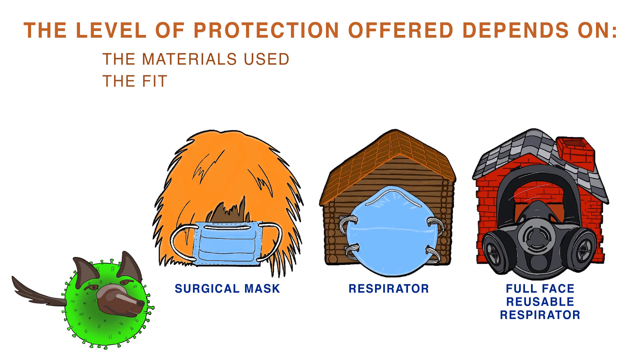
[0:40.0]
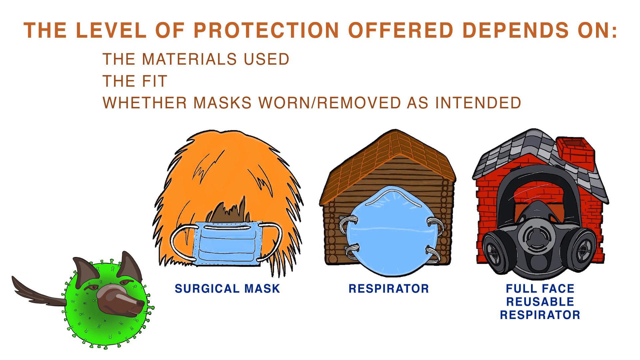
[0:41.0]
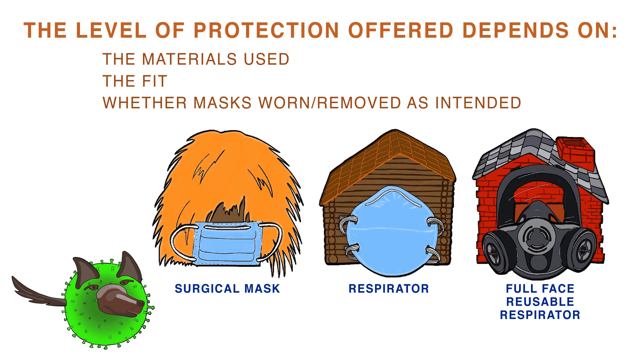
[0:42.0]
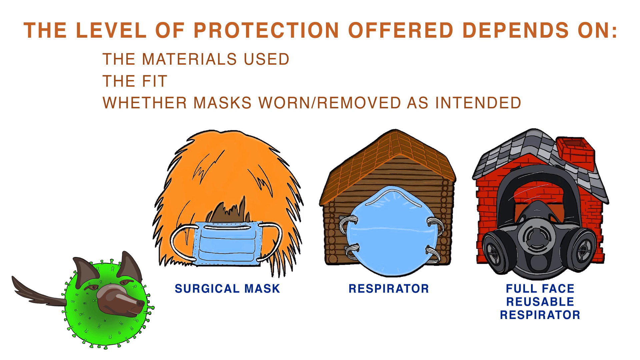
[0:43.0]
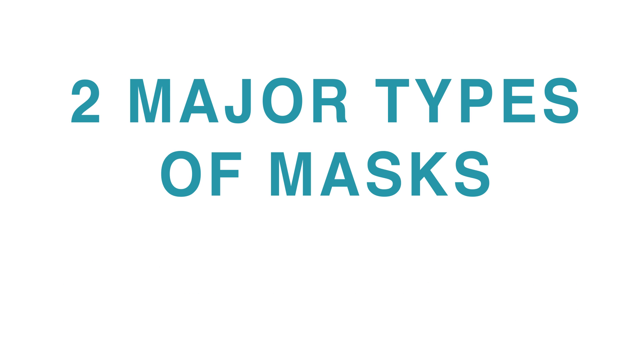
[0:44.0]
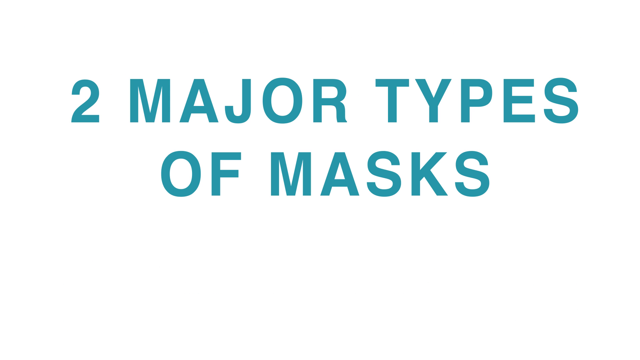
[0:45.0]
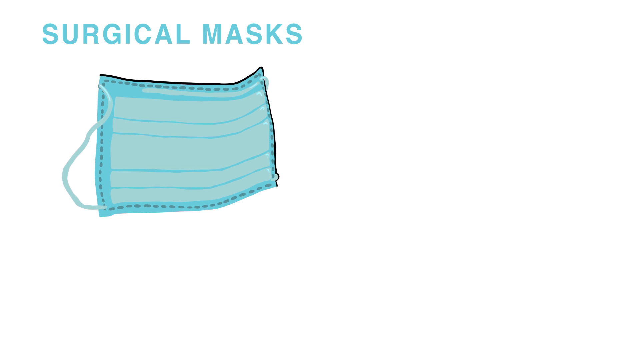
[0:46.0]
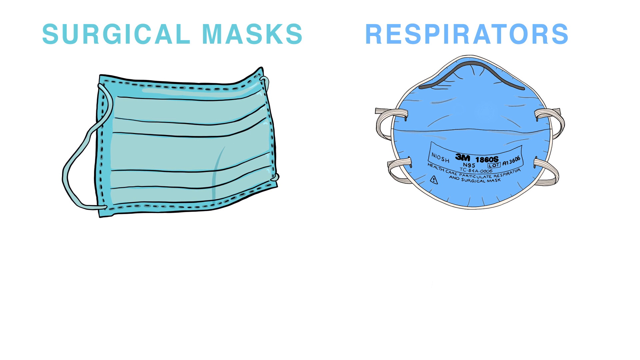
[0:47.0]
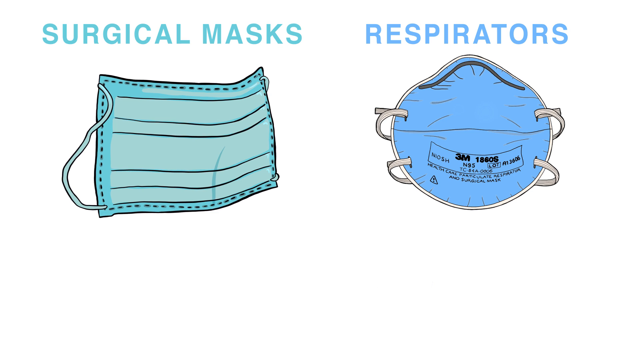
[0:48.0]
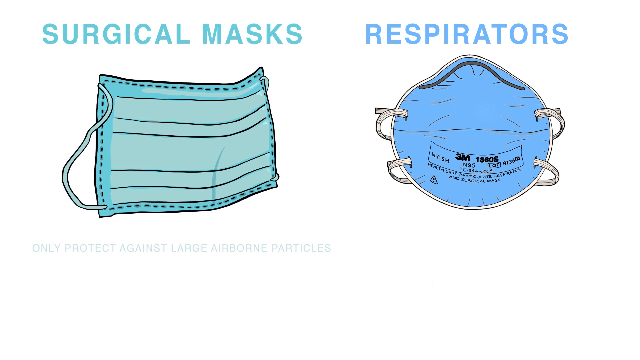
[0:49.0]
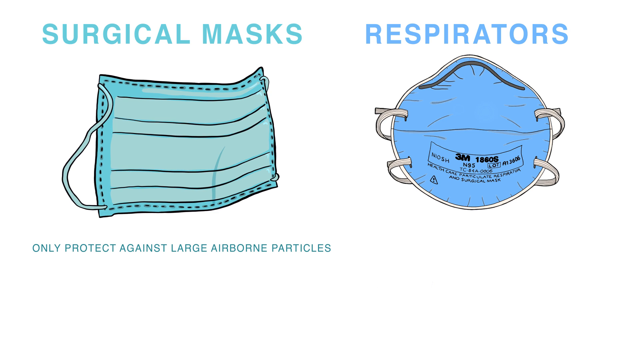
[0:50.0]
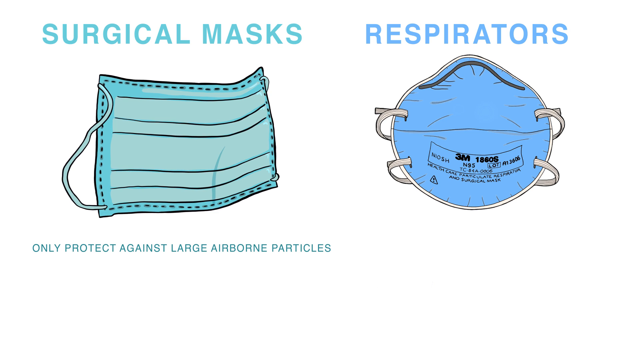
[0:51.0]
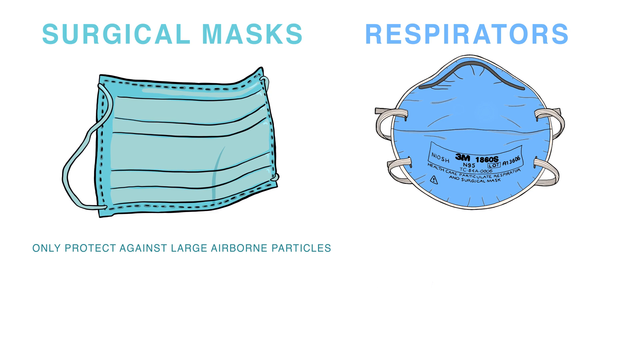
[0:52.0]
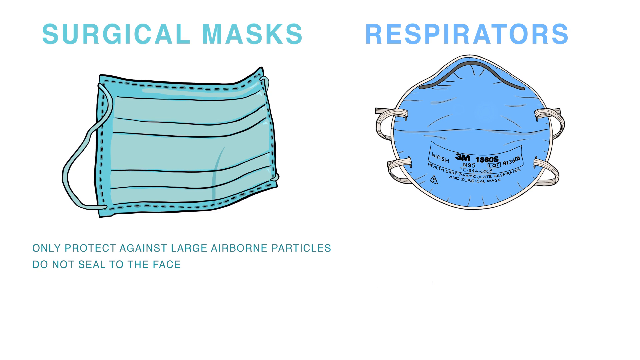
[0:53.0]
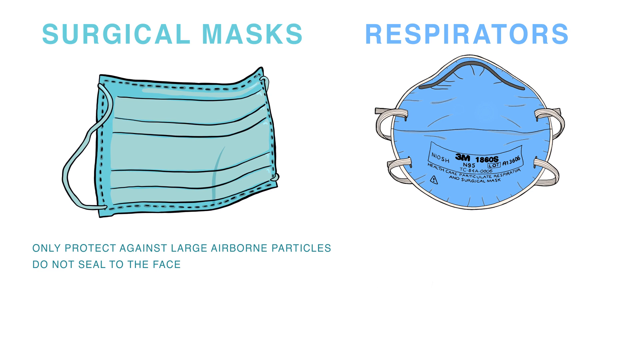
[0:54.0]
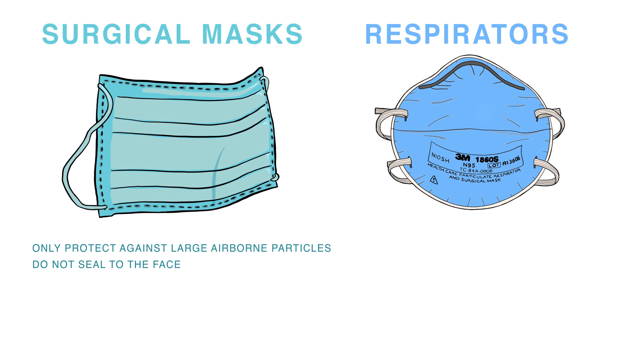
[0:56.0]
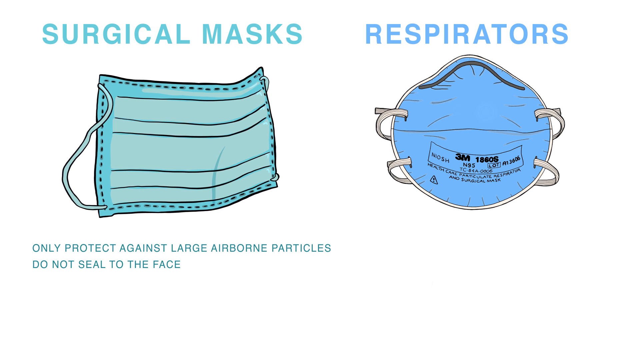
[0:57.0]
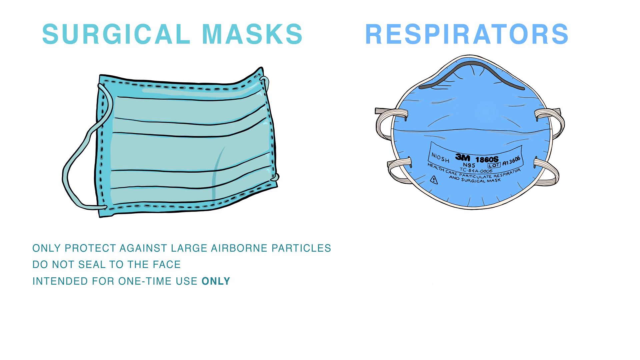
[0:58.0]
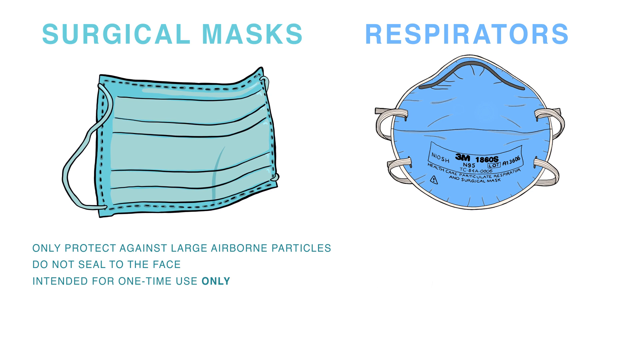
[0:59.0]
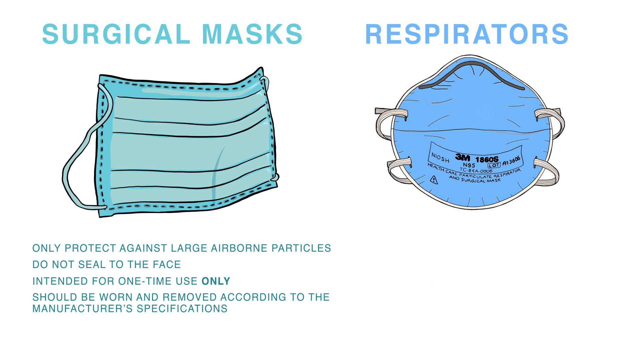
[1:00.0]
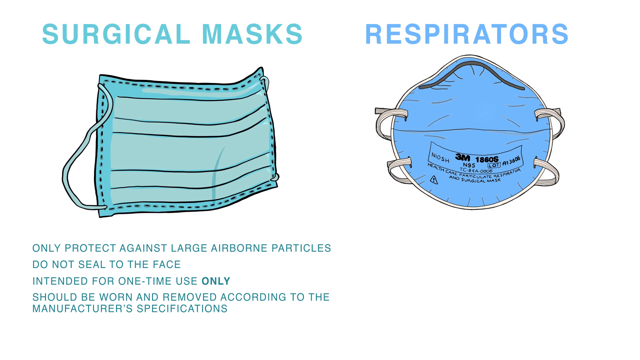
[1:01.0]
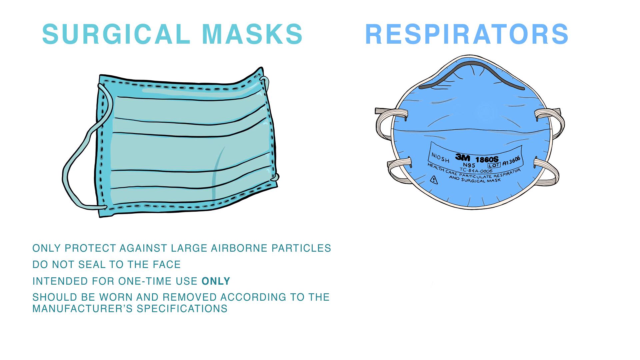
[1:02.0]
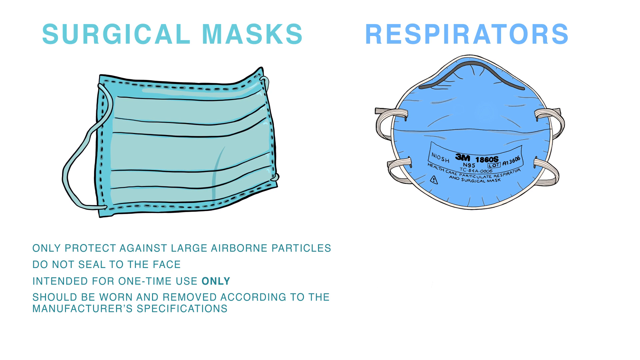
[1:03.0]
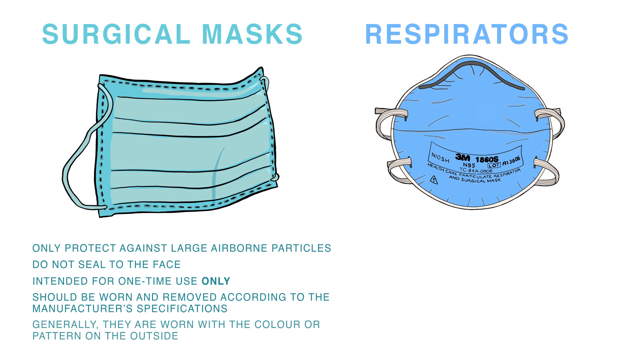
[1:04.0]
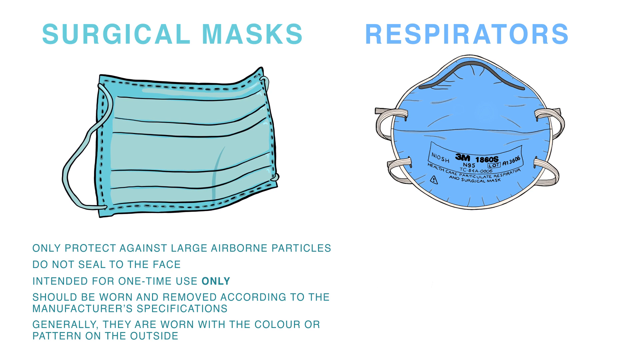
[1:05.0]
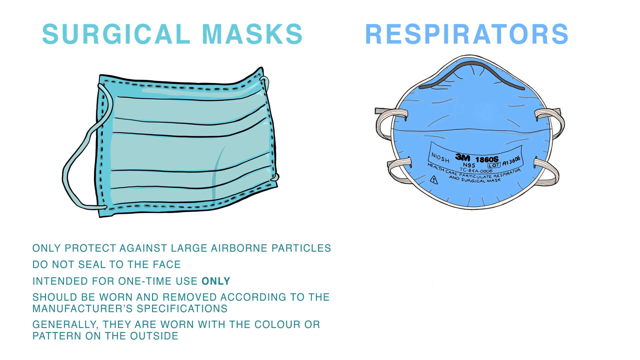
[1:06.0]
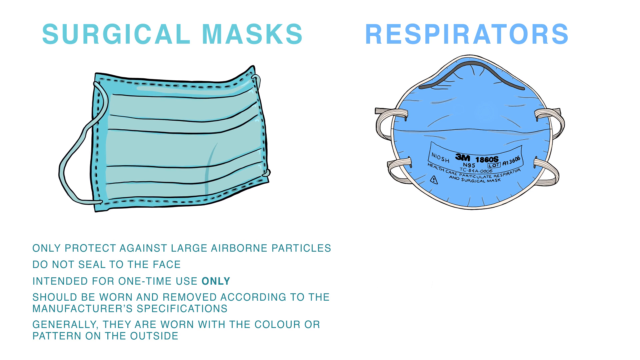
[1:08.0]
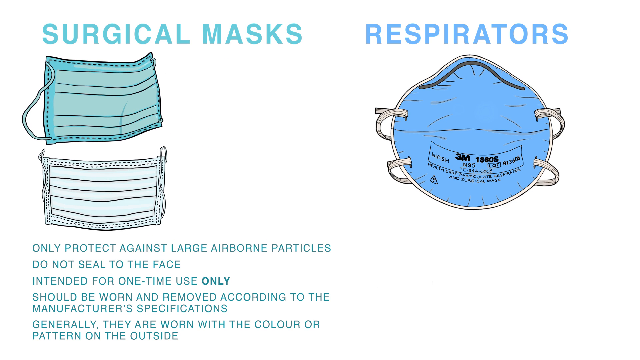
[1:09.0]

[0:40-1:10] A white screen shows four images and brown text. The text reads "the level of protection offered depends on the materials used, the fit". The images show a surgical mask, a respirator, a full face reusable respirator, and apparently a smaller respirator. The video transitions to drawn images of types of masks, surgical masks and respirators, with text below detailing what the masks protect against and how many uses they should be used for. There is an image of a respirator and a surgical mask. The focus is on types of face coverings, what they protect from and how much protection they offer, with images of surgical masks, respirators, full face reusable respirators and plain respirators. They are shown around houses and what appears to be a haystack. There is also an image of a germ wearing a respirator.